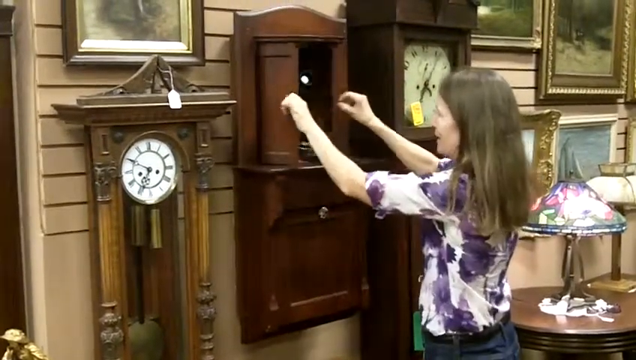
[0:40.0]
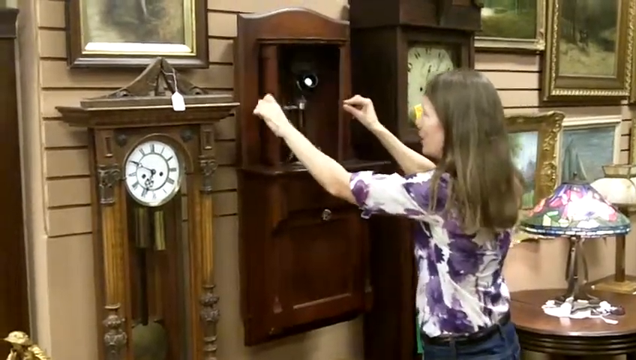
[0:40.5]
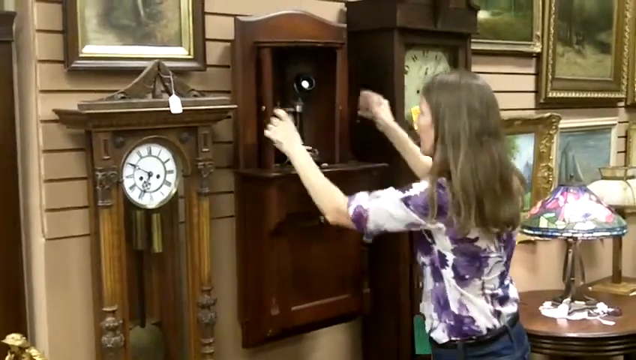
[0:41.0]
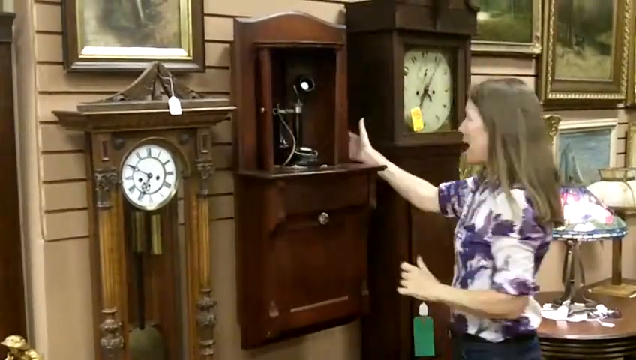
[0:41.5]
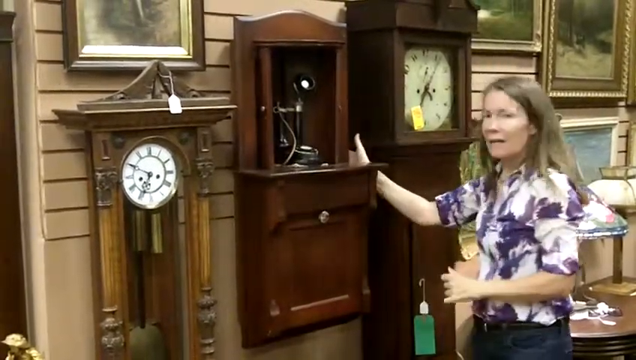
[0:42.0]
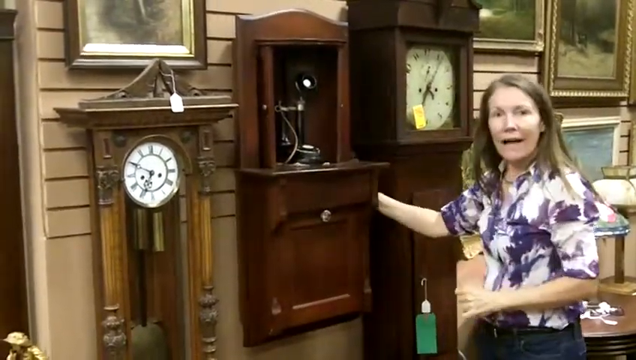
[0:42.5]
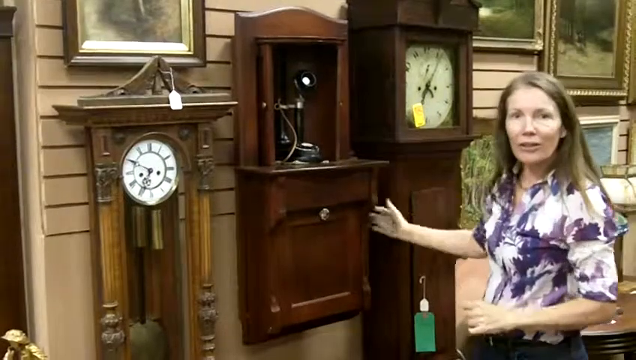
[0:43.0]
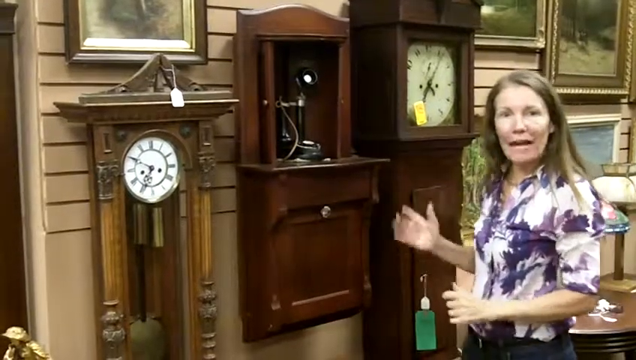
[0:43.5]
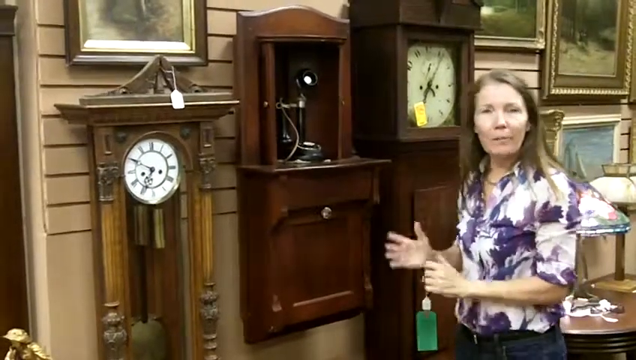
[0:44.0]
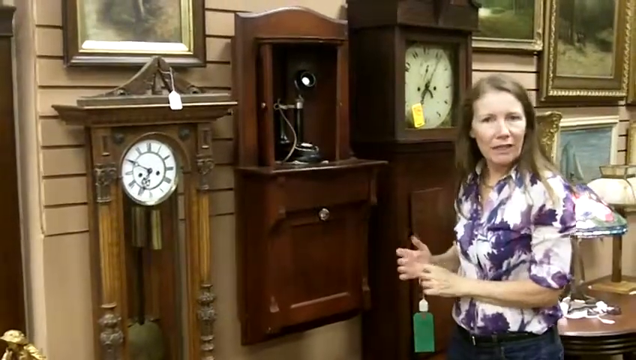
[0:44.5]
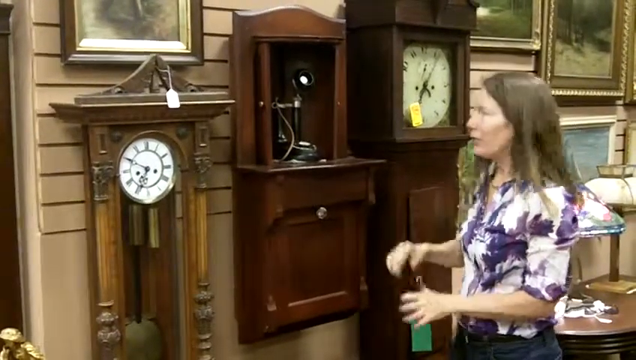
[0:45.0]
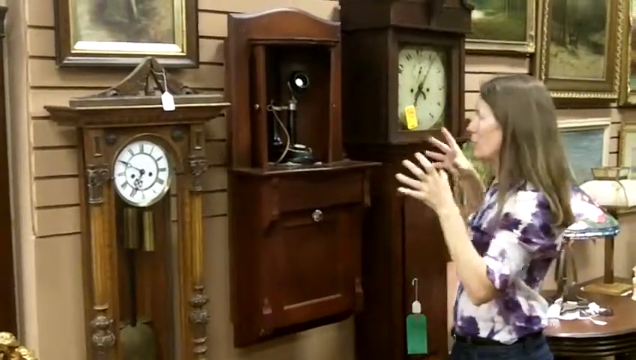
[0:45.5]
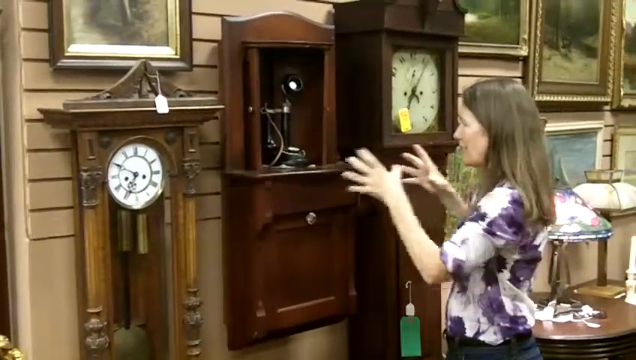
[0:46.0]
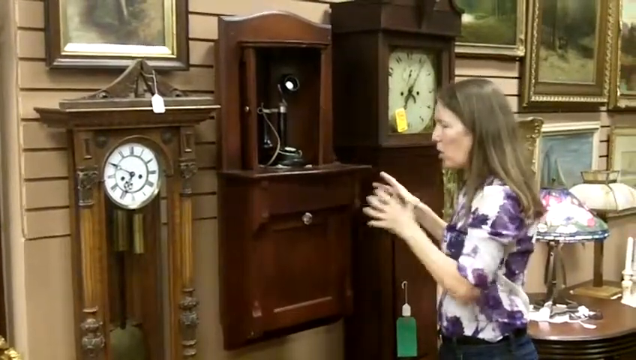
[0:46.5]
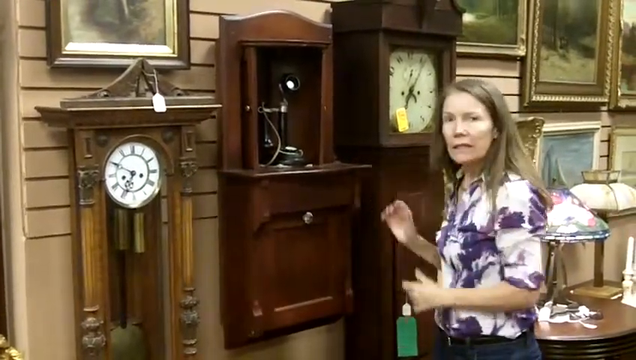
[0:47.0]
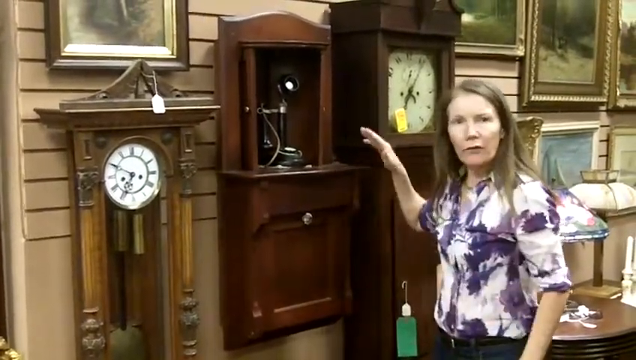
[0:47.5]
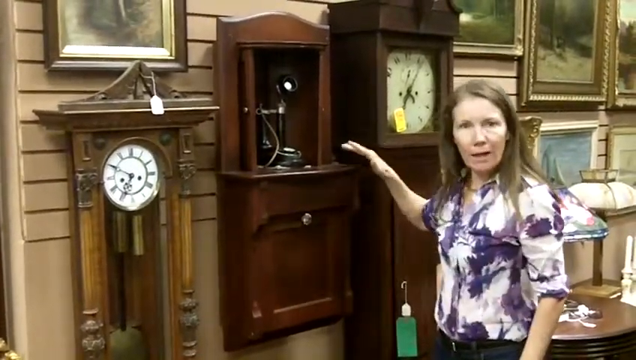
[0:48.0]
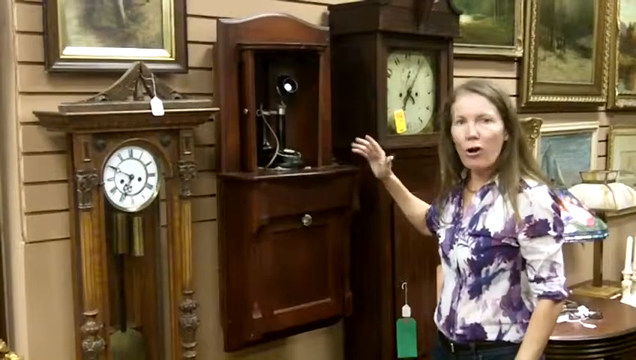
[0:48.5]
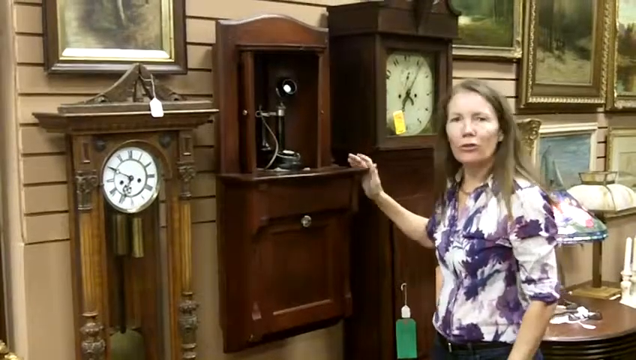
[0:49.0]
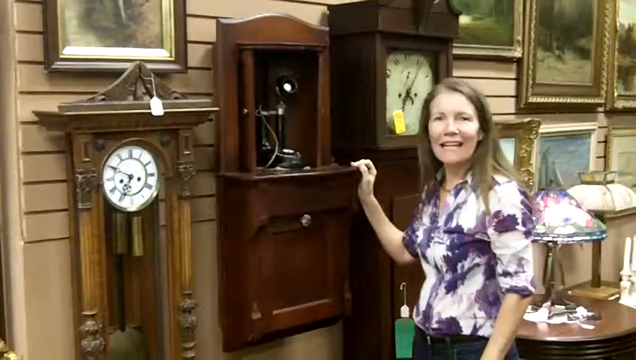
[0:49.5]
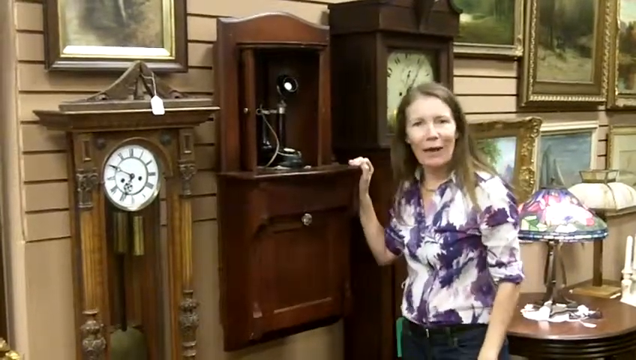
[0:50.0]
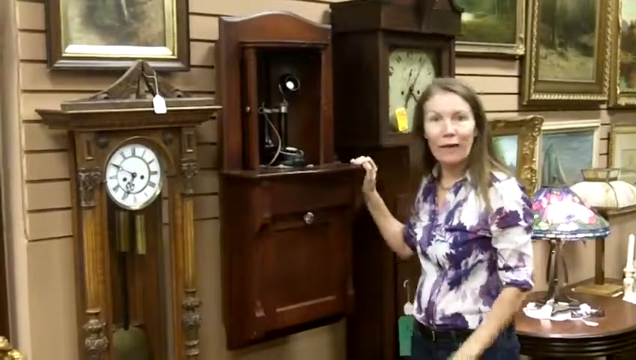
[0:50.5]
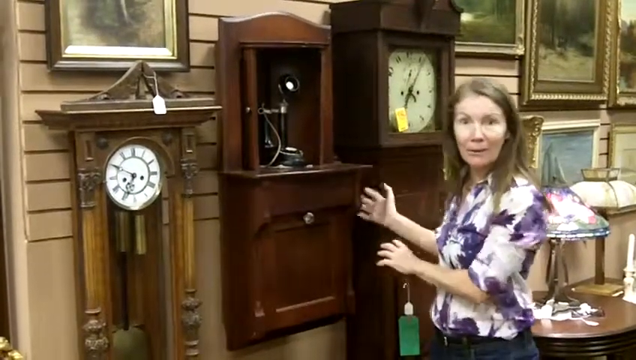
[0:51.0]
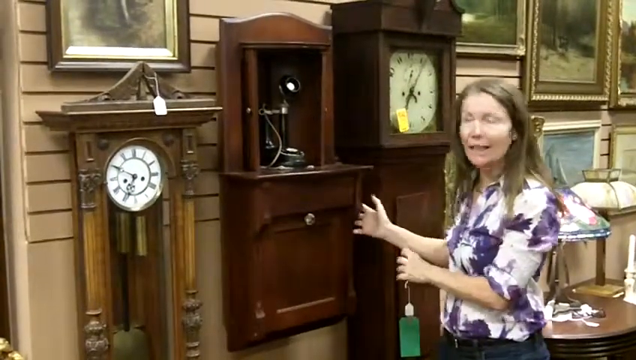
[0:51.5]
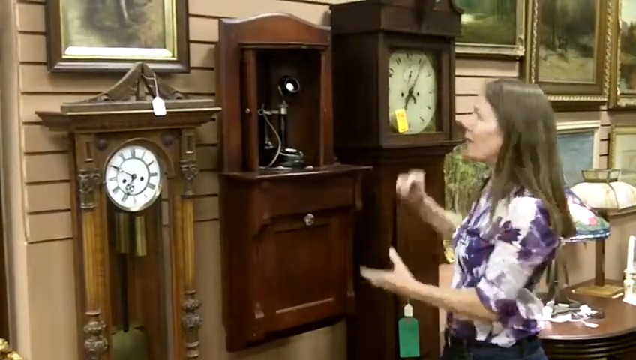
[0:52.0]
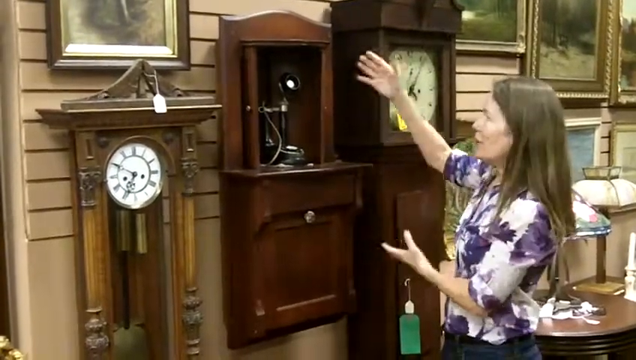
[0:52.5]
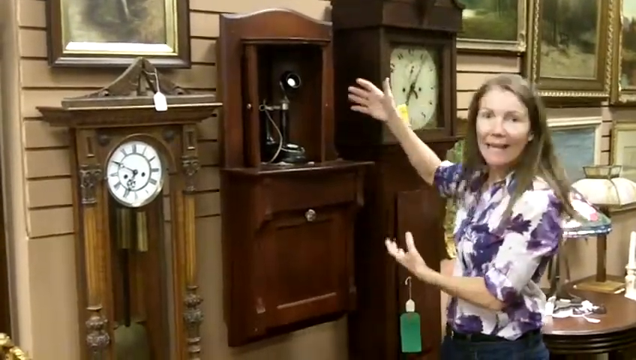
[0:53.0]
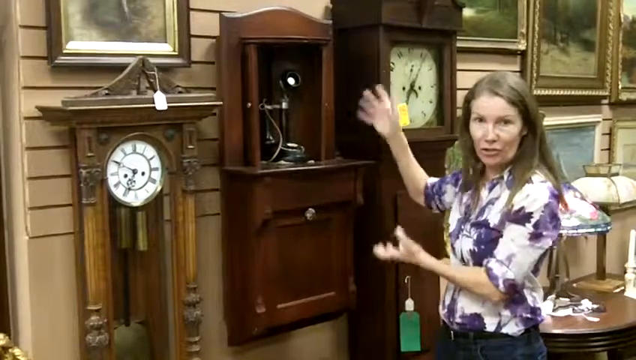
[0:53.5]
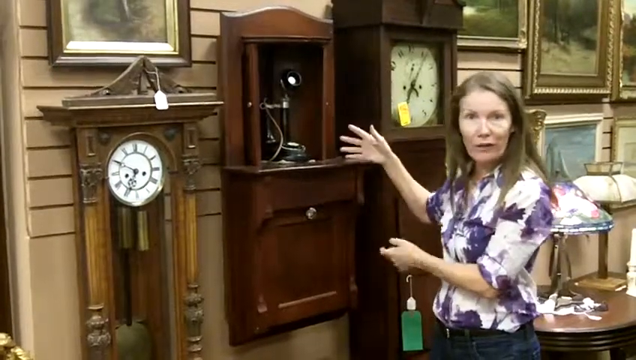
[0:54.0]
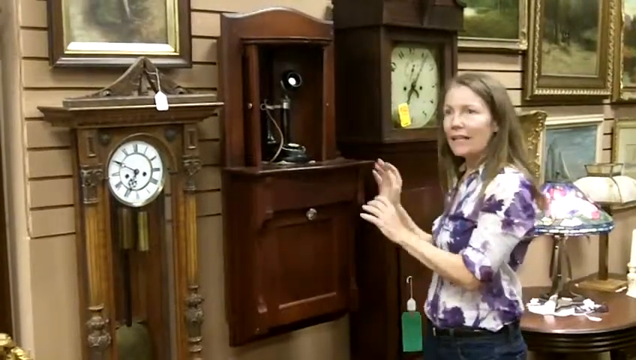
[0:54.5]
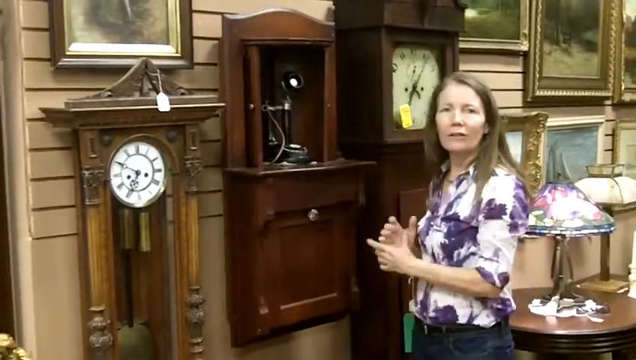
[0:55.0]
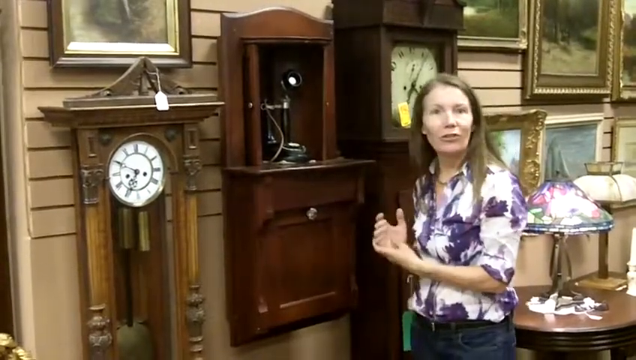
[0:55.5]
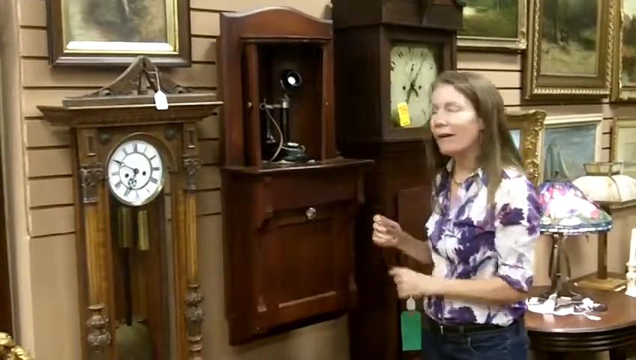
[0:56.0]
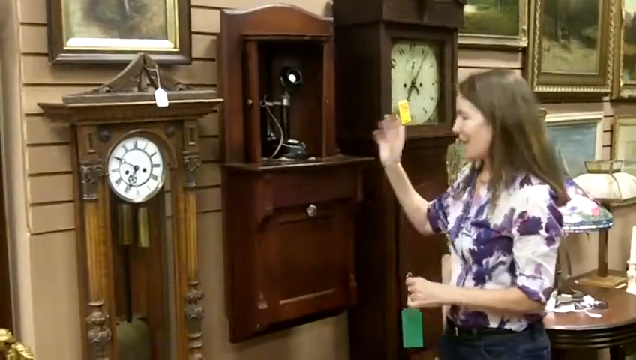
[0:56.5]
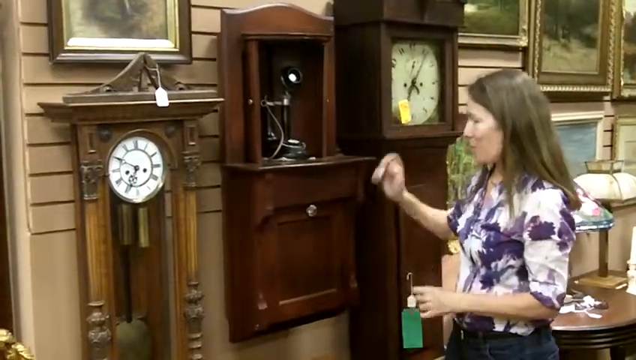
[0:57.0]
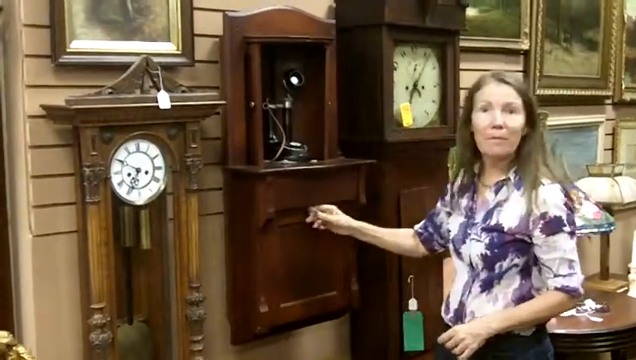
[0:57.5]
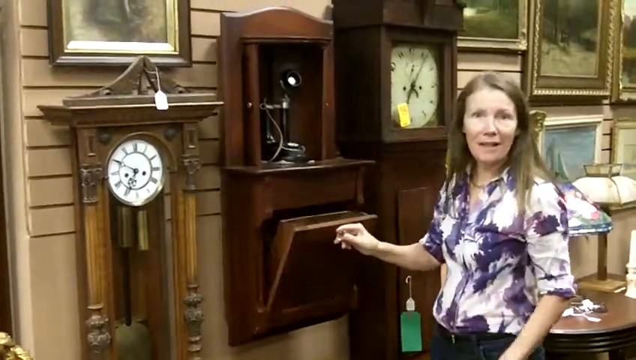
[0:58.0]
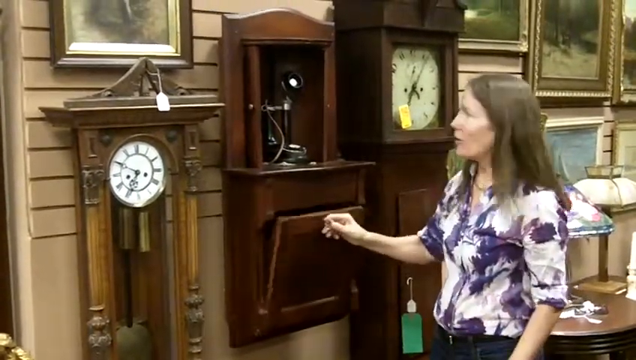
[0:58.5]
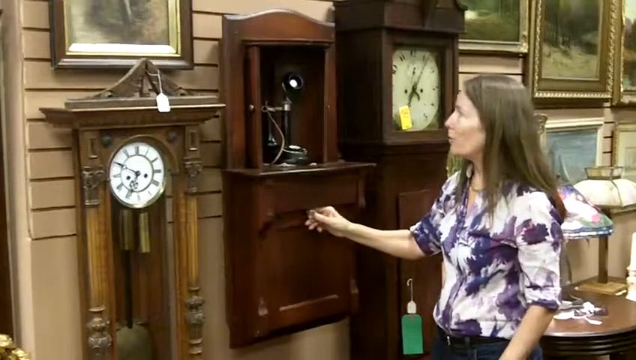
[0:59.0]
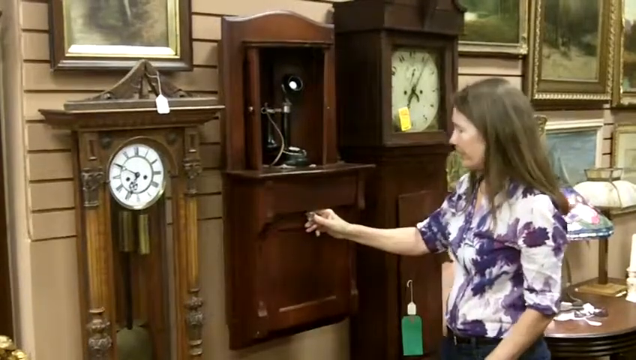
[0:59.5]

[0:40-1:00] Pictures in different frames are mounted on the wall in the background, and there are decorations made of varnished wood. The decoration includes two white, circular clocks, a small one and a big one, set in a wooden decoration. The woman keeps talking as she opens the cupboard's cabinets. The cupboard is brown, made of varnished wood, and inside it is an item that seems to be a cell phone. She keeps showing and pointing with her hands. She is a white woman wearing jeans and a shirt in two colors, purple and white.